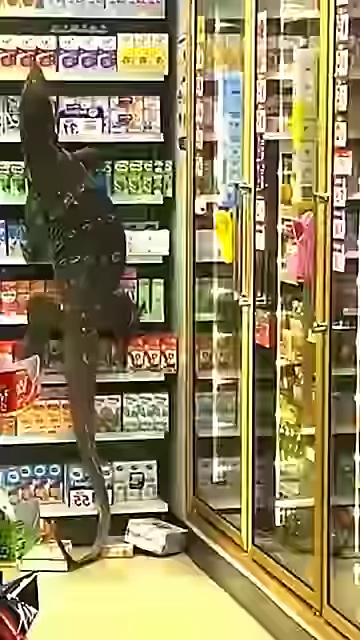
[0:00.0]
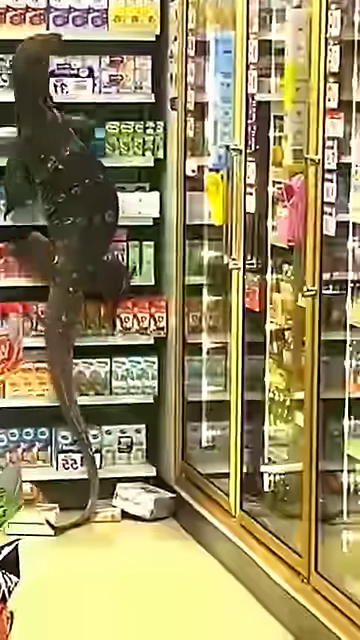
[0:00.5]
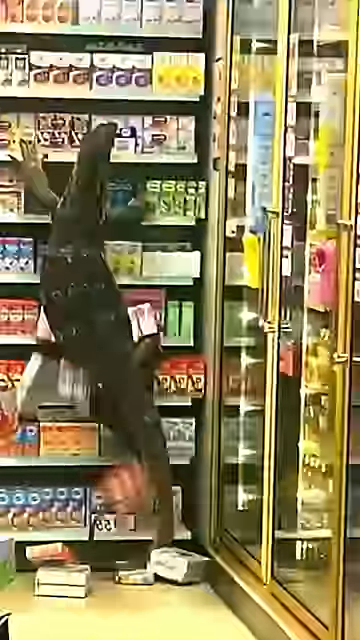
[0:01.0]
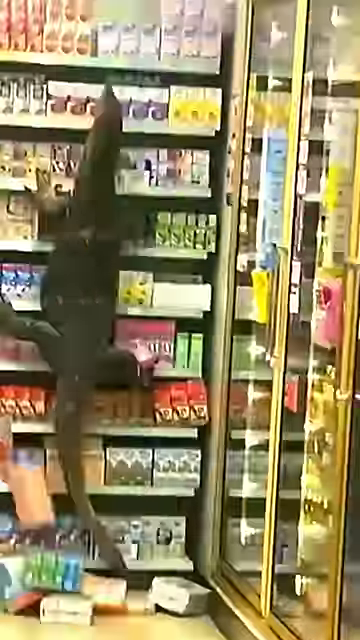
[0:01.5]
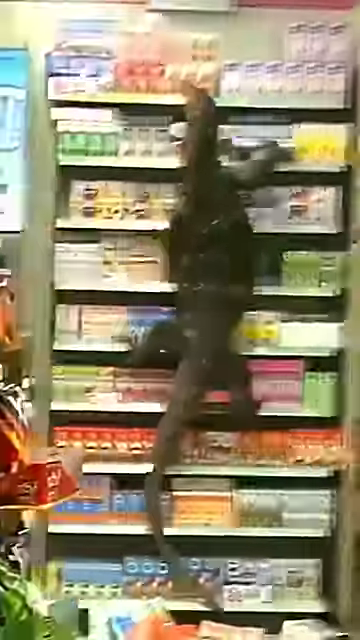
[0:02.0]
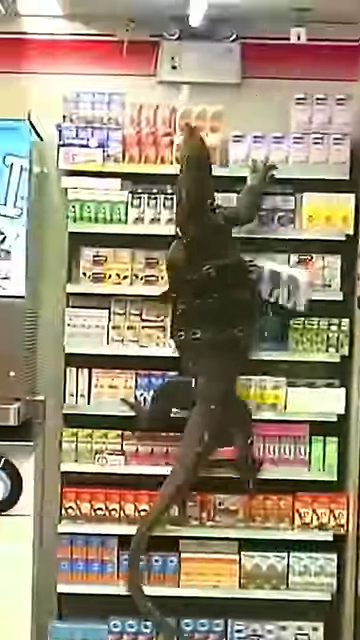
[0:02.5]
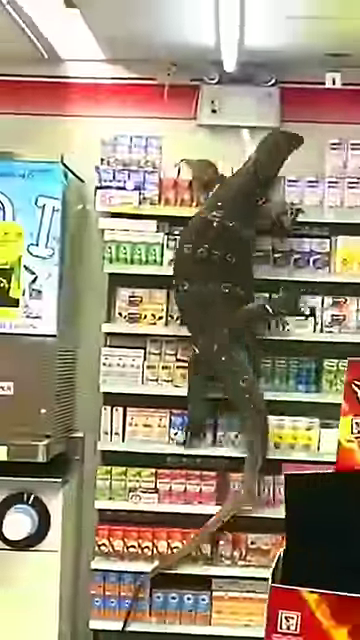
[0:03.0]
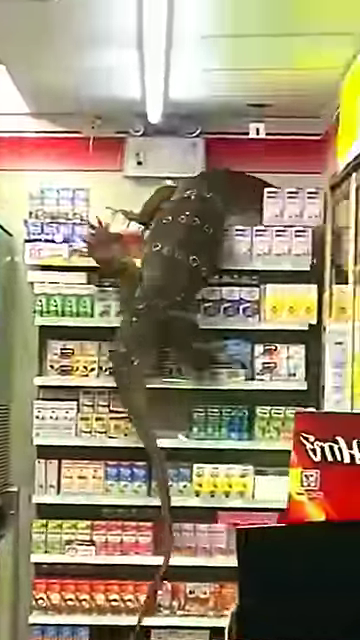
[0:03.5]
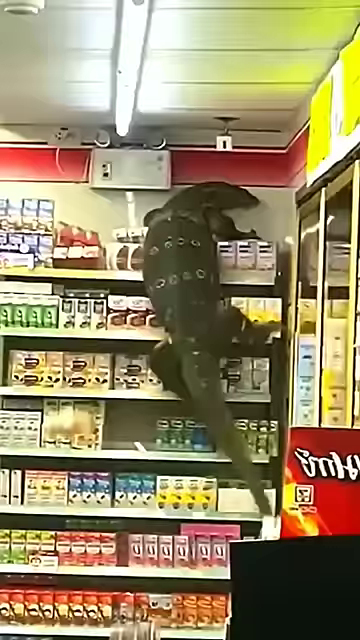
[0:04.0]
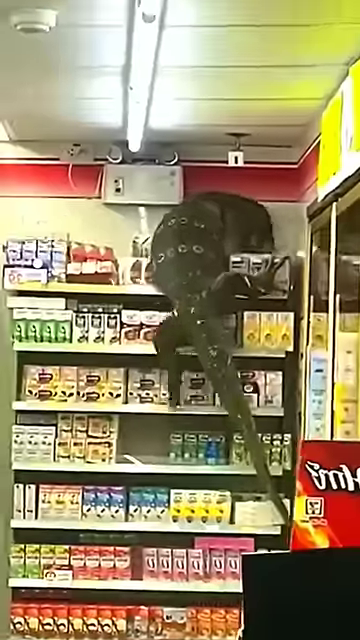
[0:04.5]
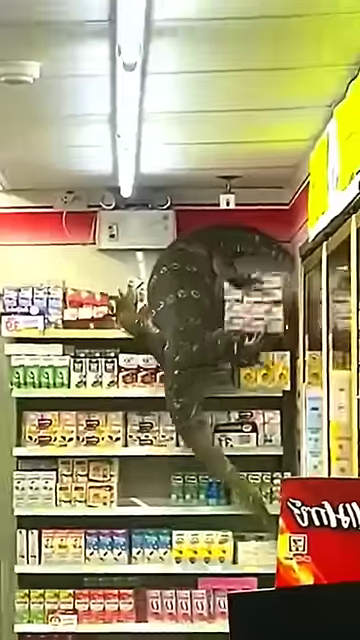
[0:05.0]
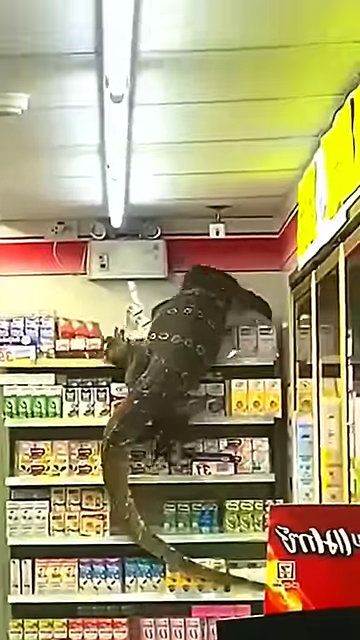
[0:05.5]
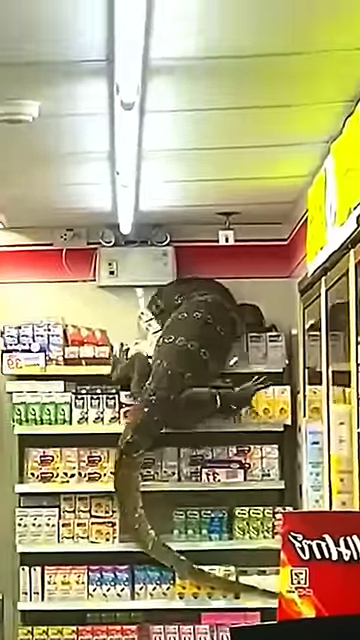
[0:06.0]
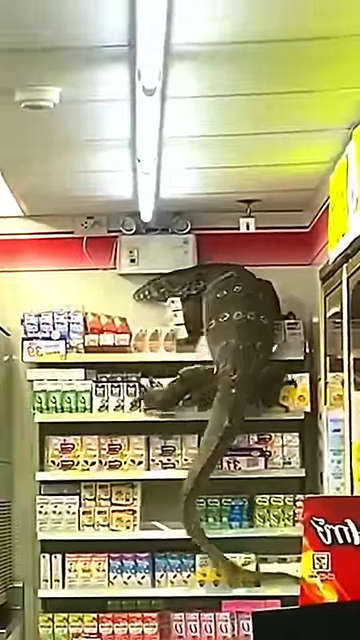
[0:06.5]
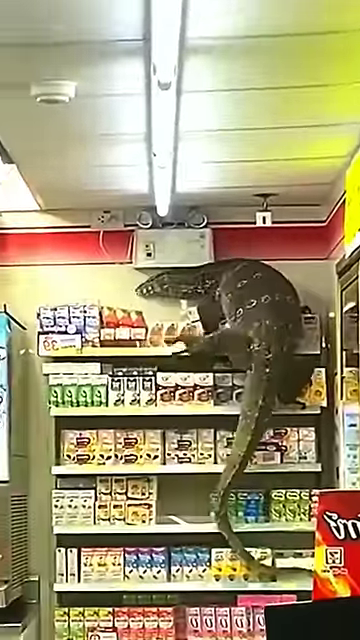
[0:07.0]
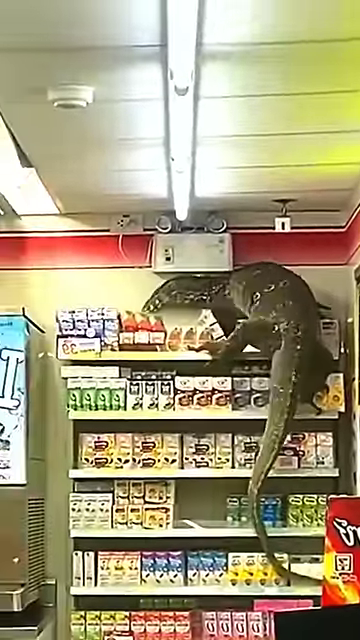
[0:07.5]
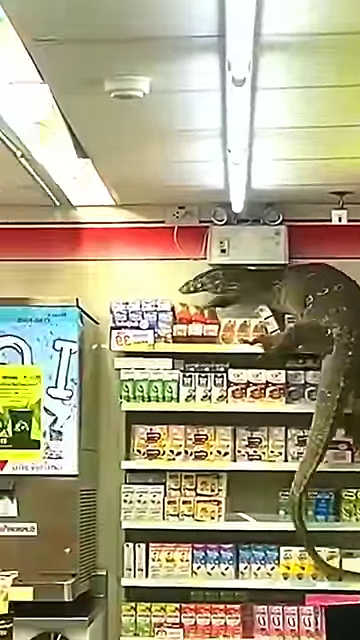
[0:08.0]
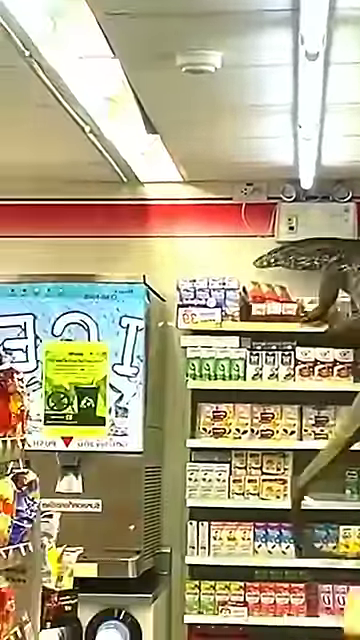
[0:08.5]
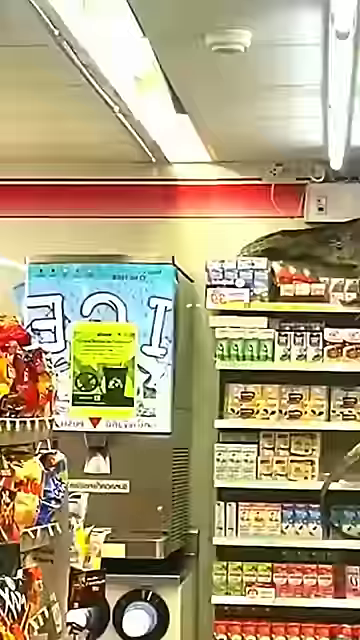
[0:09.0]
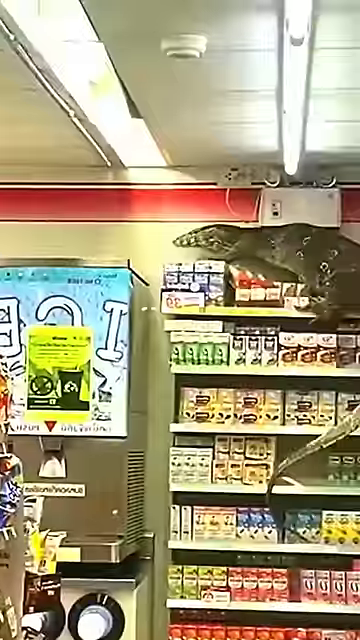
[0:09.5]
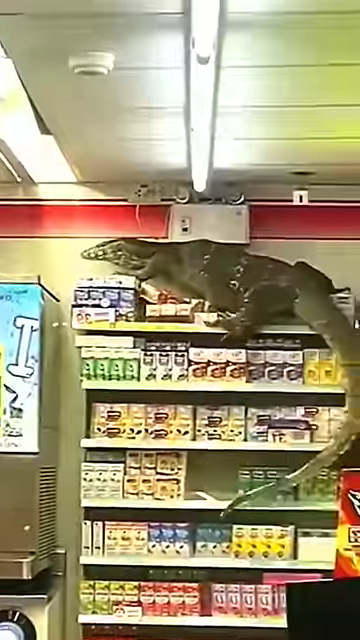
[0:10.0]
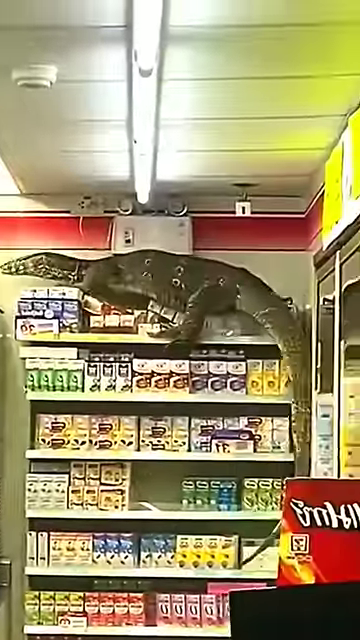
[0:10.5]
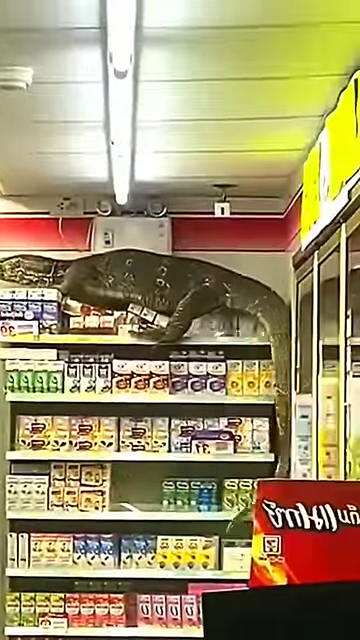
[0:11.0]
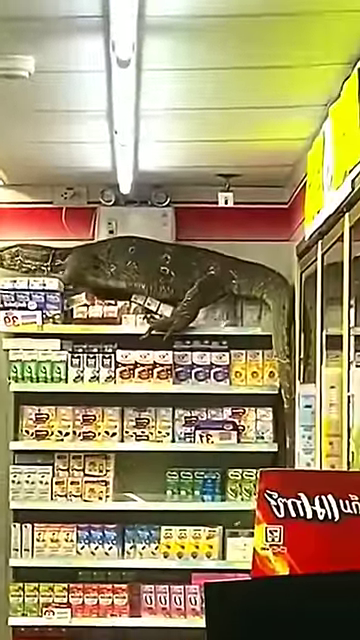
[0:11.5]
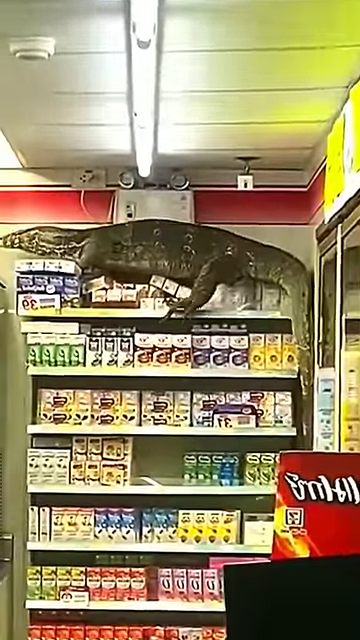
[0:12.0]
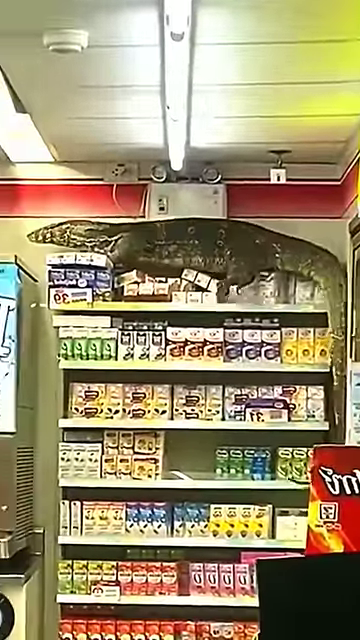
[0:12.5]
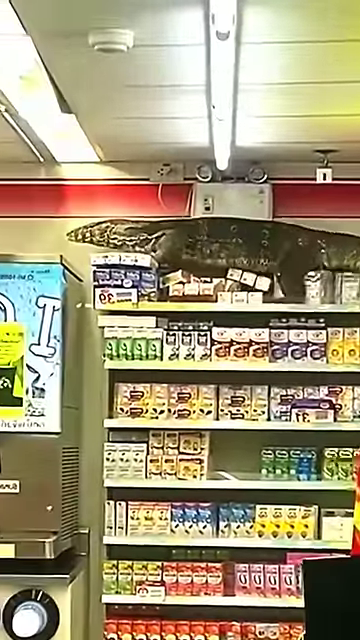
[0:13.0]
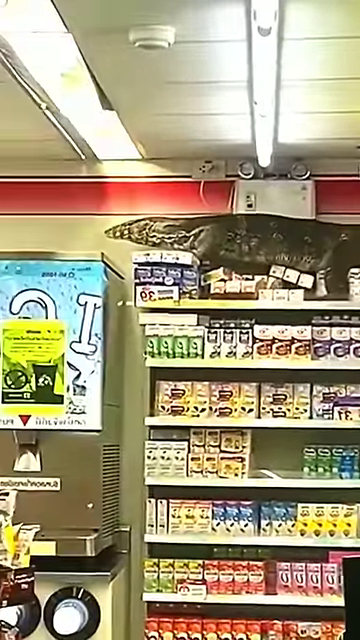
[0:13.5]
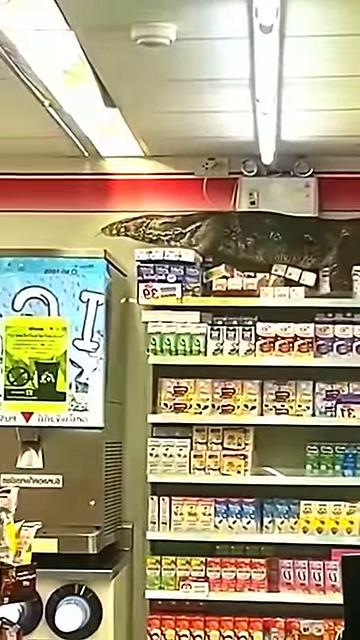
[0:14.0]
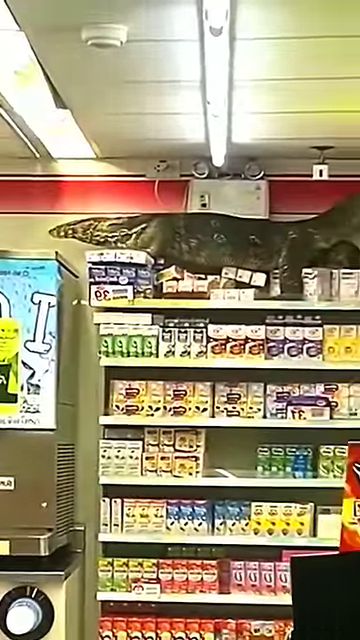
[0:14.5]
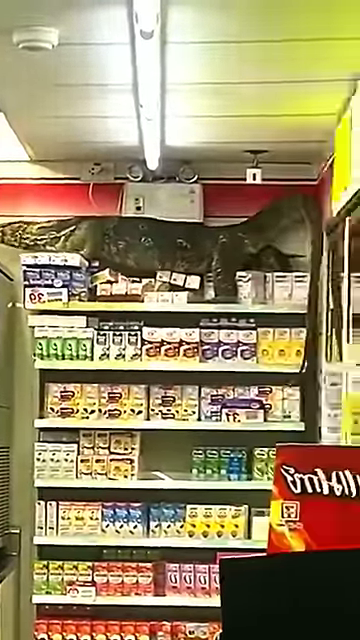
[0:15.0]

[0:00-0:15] A creature very similar to a Komodo dragon, apparently some sort of giant lizard or snake offshoot, is shaped like a Komodo dragon but has a very narrow head. A forked tongue comes out of its mouth, and it seems to sniff the way a snake would, so it is perhaps a creature related to both a snake and a dragon or lizard. It has made its way into some sort of convenience store or gas station. Glass doors where drinks are bought are visible, and a bunch of box products on multiple shelves are in the corner. The creature climbs to the very top of the shelf and seems to have taken the corner hostage. There is also a machine that says "ice". The place looks to be in a foreign part of the world, perhaps India. Someone is recording the creature on their phone.